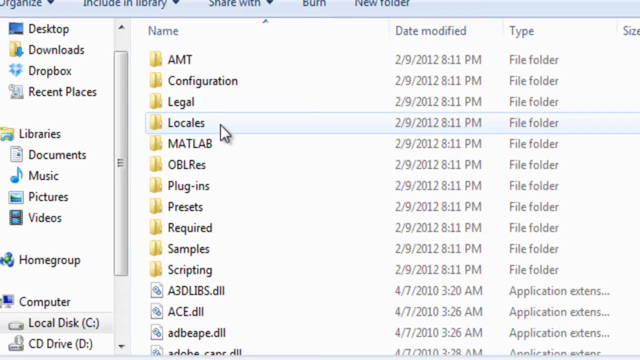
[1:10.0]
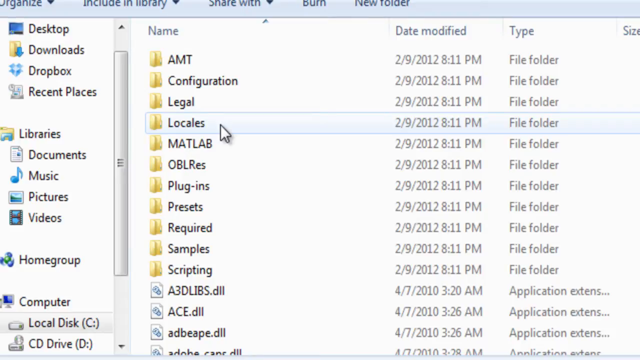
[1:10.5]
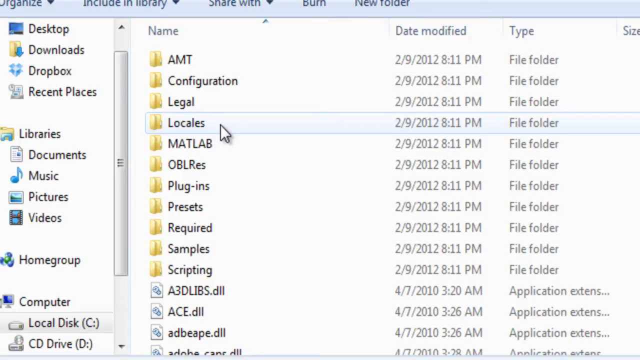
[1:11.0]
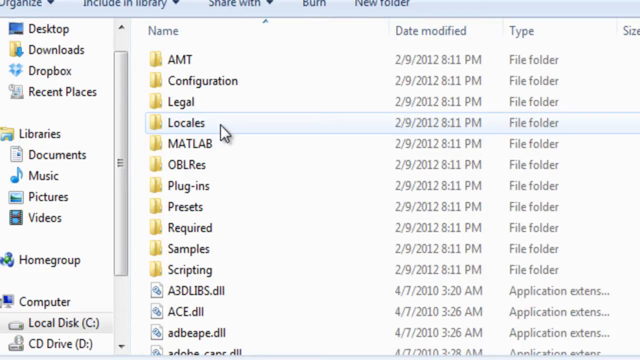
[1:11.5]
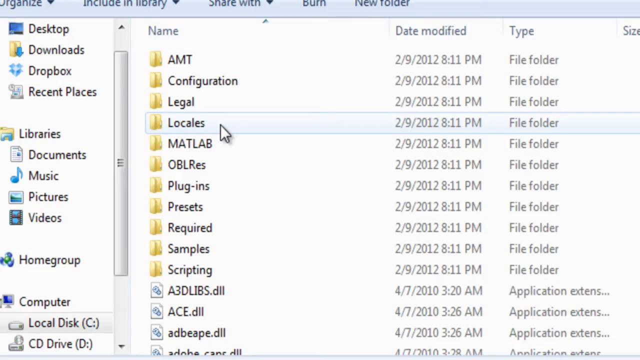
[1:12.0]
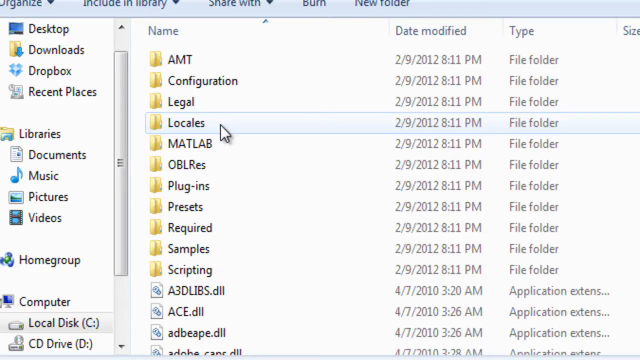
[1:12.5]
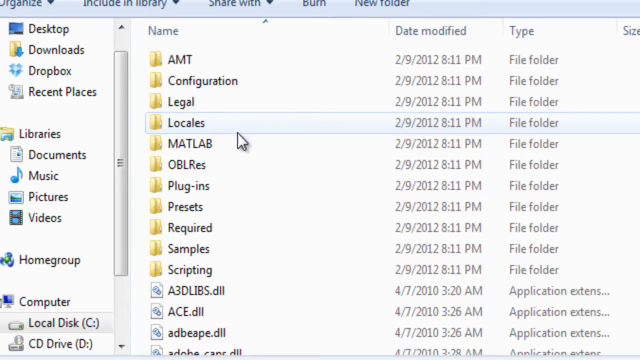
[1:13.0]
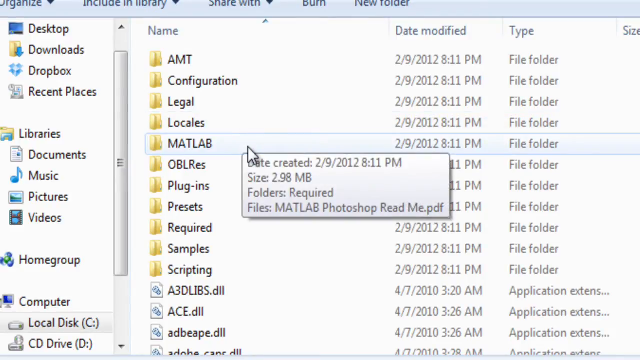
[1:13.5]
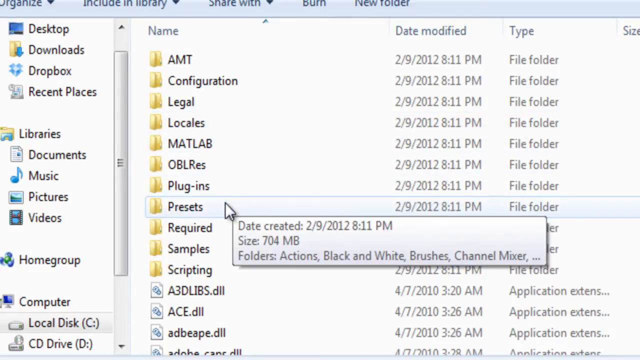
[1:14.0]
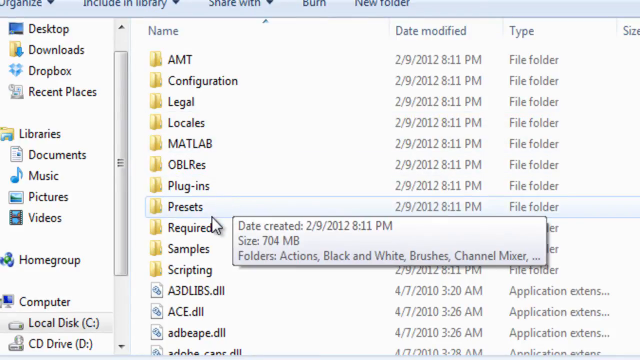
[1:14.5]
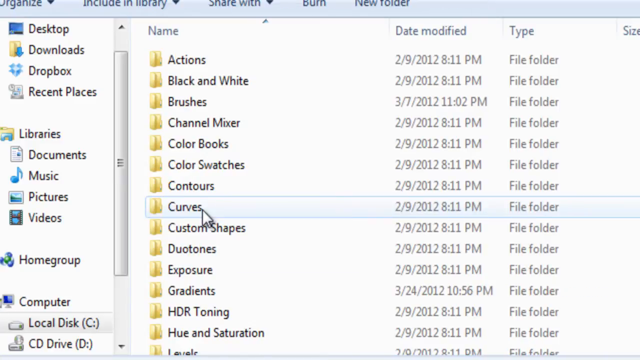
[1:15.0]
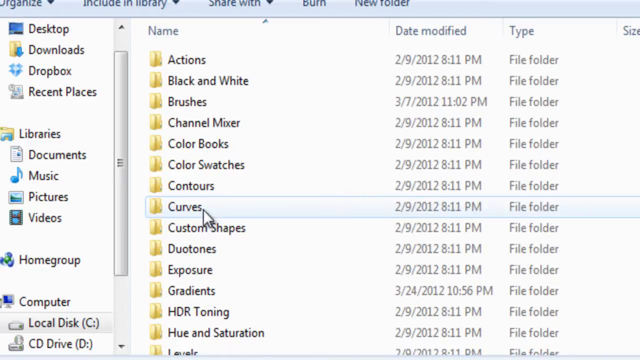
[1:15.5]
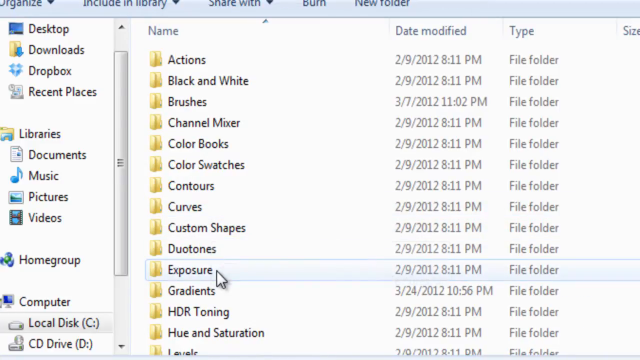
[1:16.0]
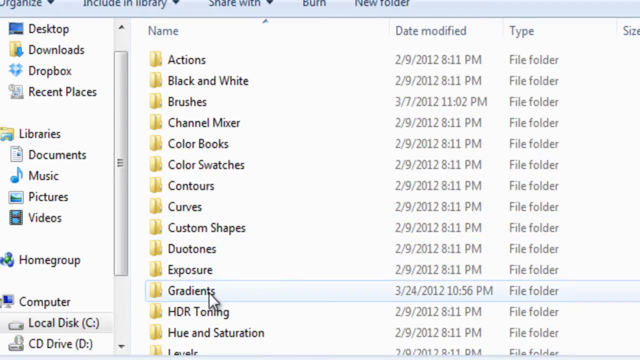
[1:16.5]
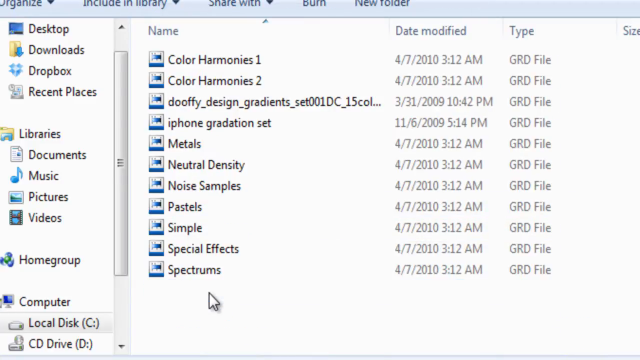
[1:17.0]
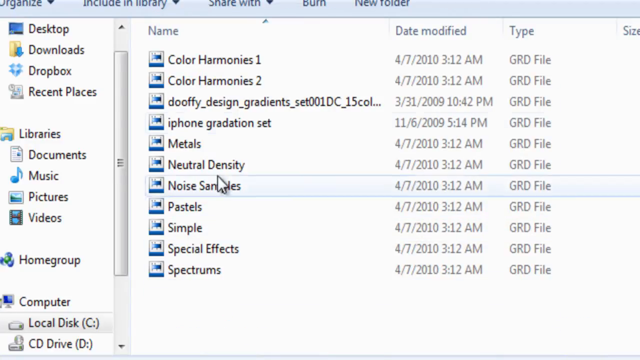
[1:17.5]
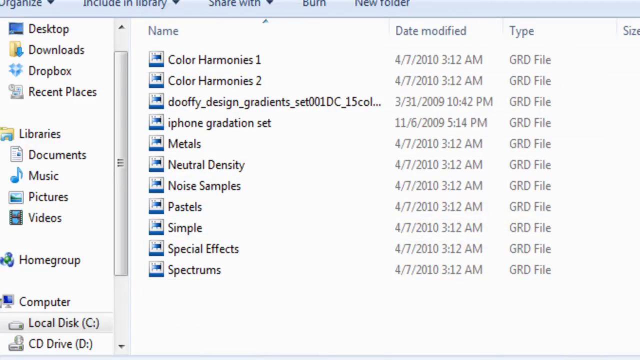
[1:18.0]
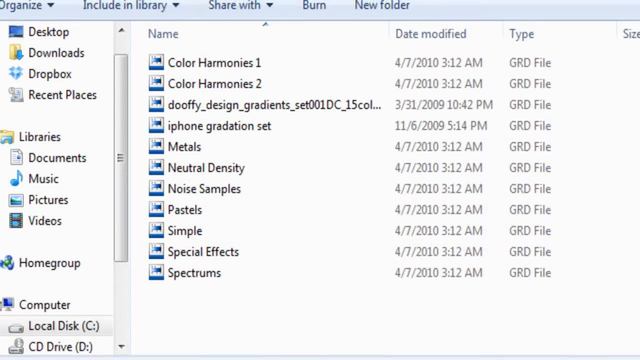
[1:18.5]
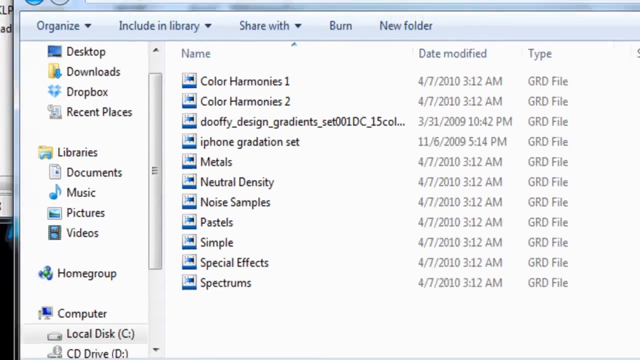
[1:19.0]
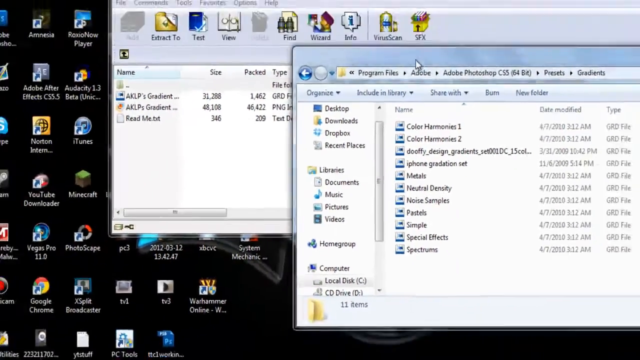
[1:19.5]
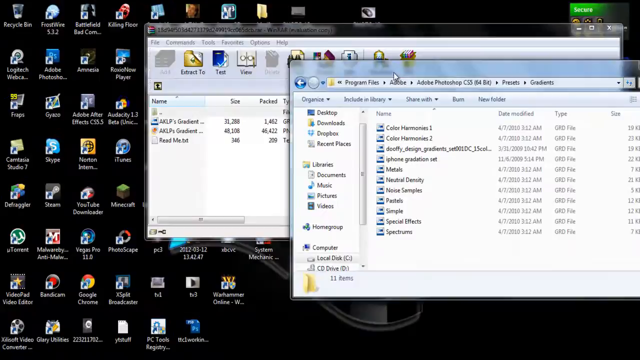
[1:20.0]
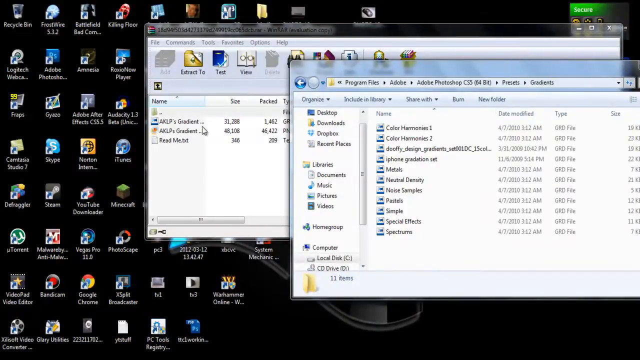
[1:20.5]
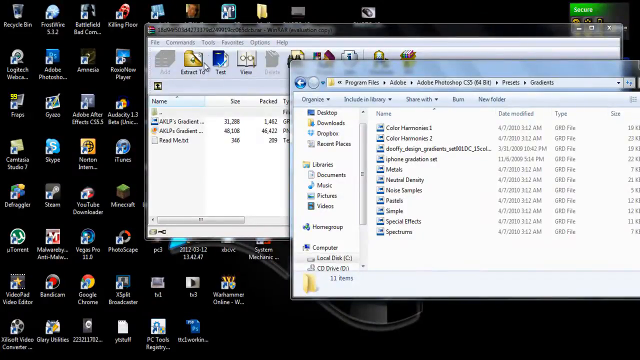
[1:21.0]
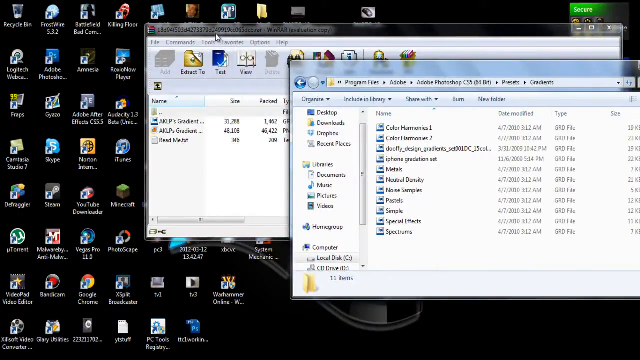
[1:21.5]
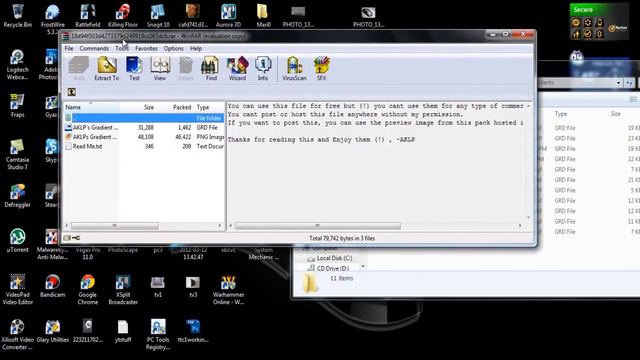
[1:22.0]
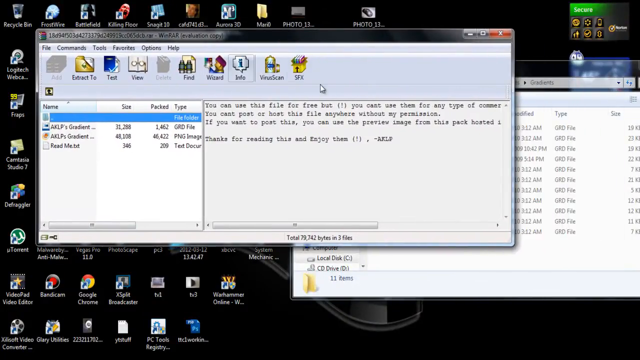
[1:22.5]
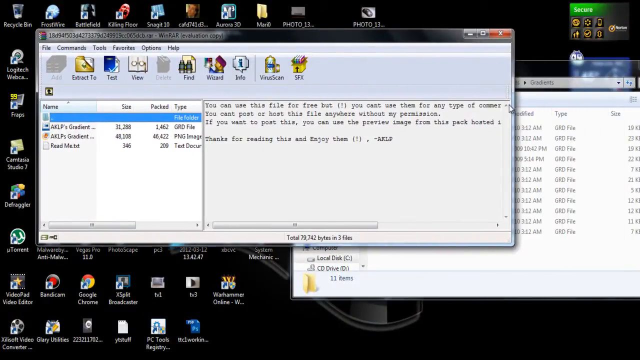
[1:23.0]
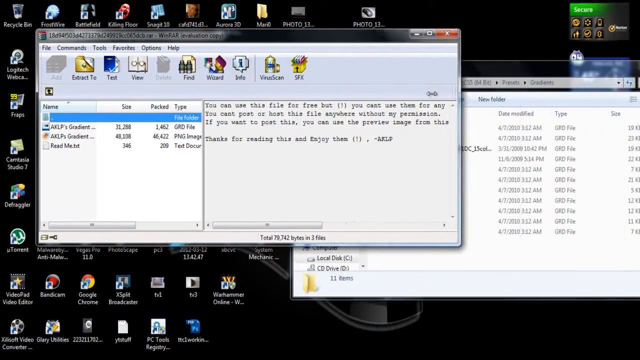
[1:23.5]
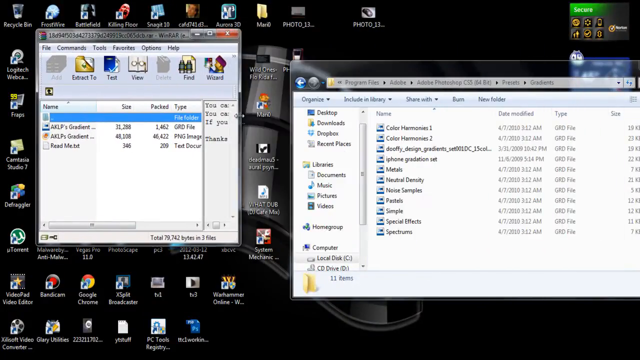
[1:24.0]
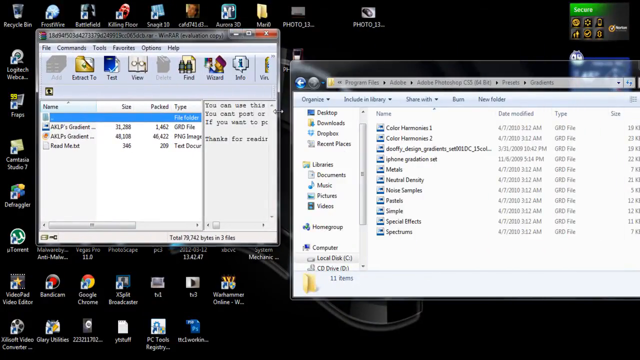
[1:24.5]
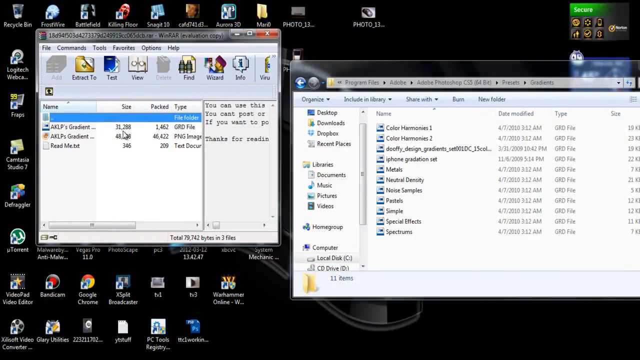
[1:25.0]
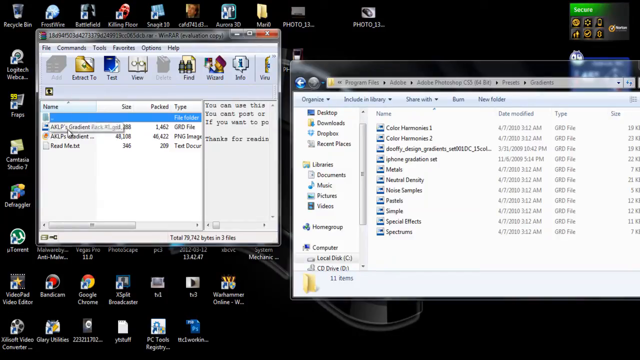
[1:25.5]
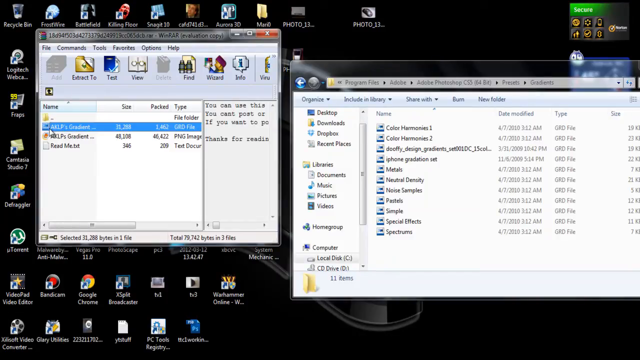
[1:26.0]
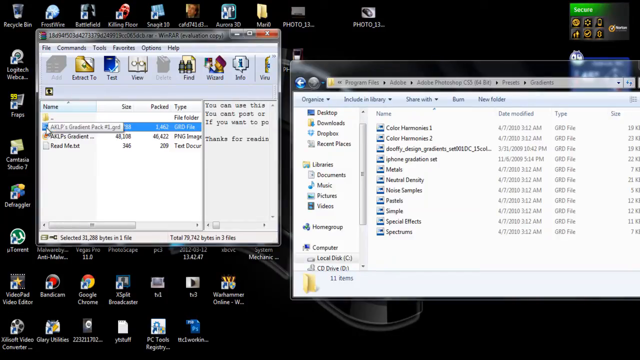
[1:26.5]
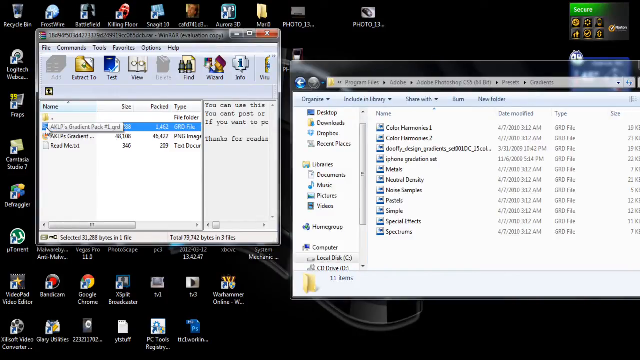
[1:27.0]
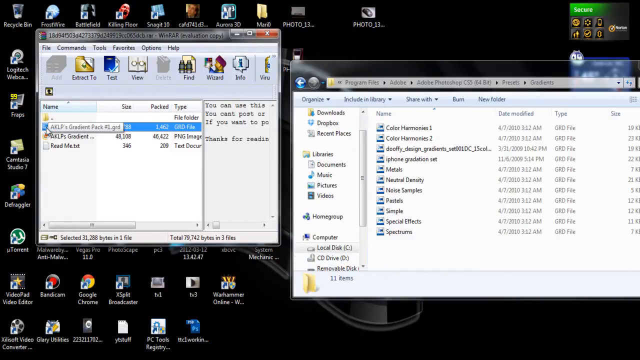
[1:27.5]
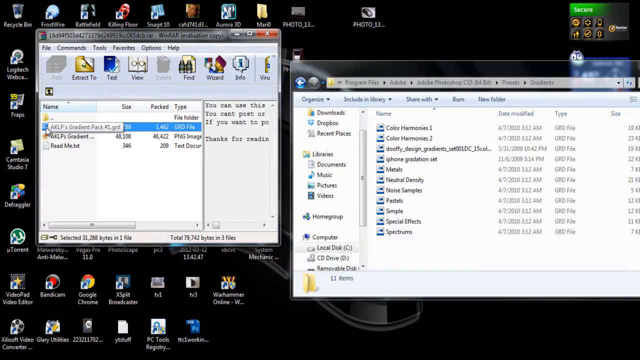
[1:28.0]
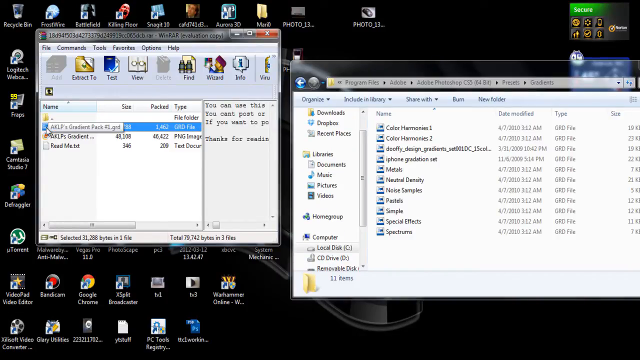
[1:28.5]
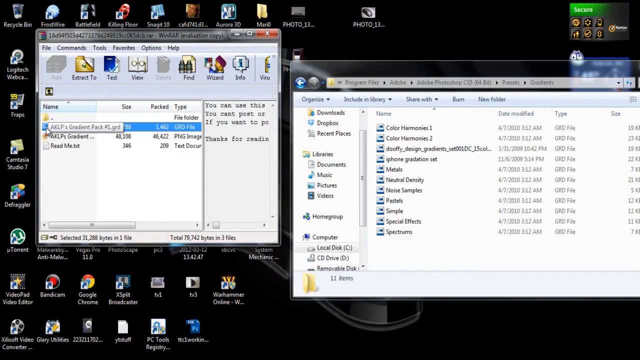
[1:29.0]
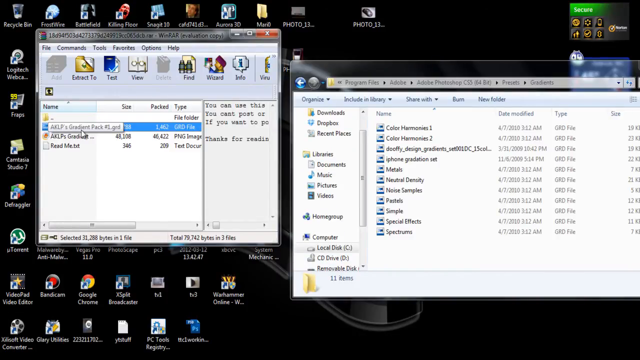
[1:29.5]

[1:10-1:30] A Windows File Explorer window is open, and a folder named Presets is accessed; the mouse then scrolls down to select Gradients. The alternate window that is open is dragged from the center of the screen to the left and resized to a smaller box. Then what looks like a file named aklp-gradients is accessed from the new window while the File Explorer window remains open. The window is not sized to the entire screen; it just leaves the different folders or files of gradients open and is neither closed nor minimized while the other window is accessed. As the gradient window is resized, the bottom of the window shows a total of 70-something thousand in files, showing the size of the content in the window.